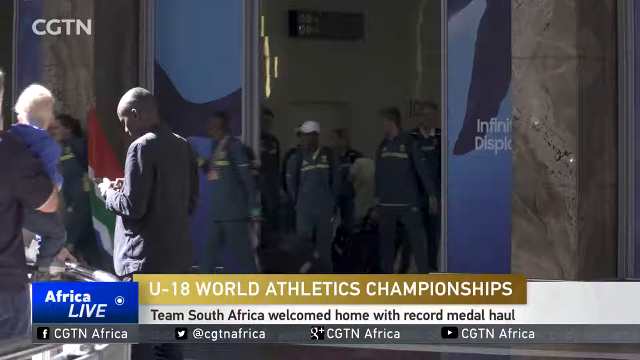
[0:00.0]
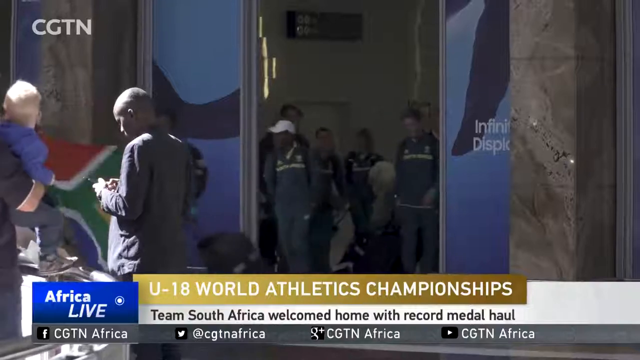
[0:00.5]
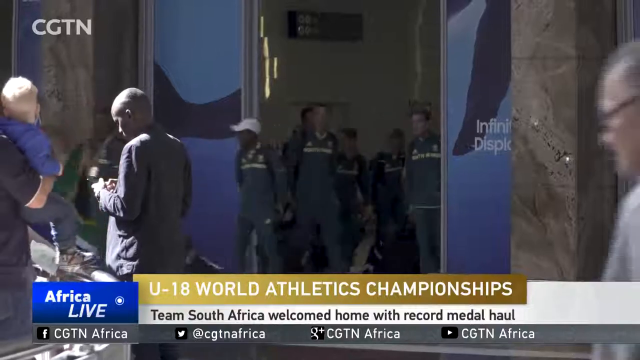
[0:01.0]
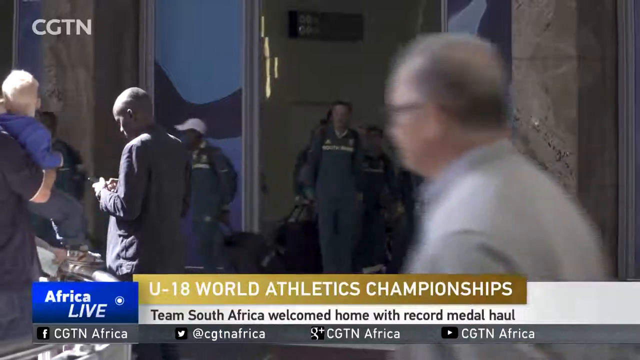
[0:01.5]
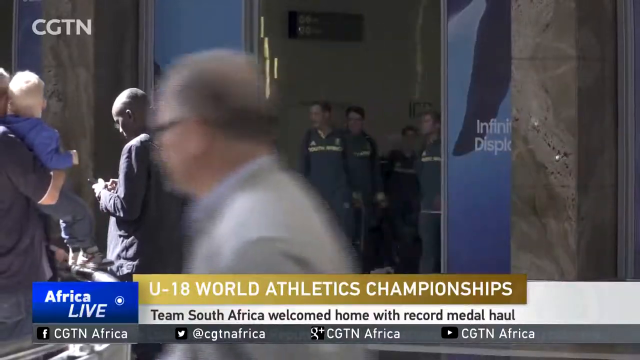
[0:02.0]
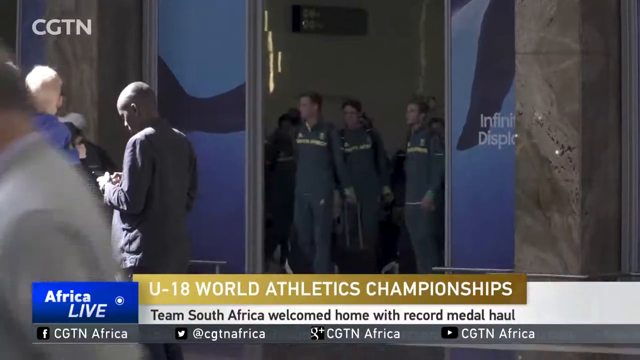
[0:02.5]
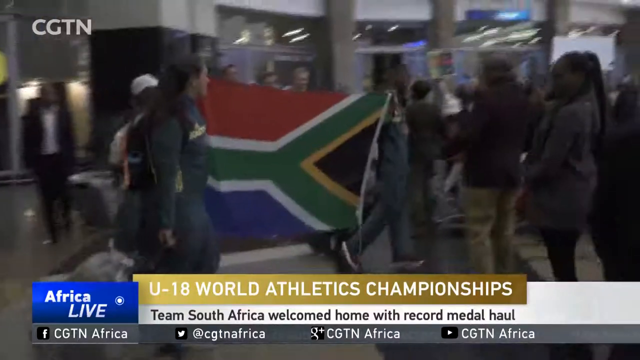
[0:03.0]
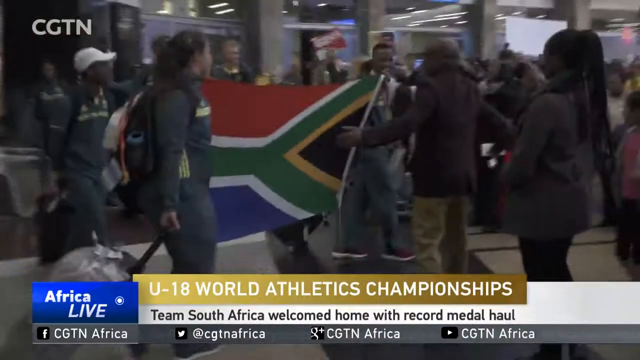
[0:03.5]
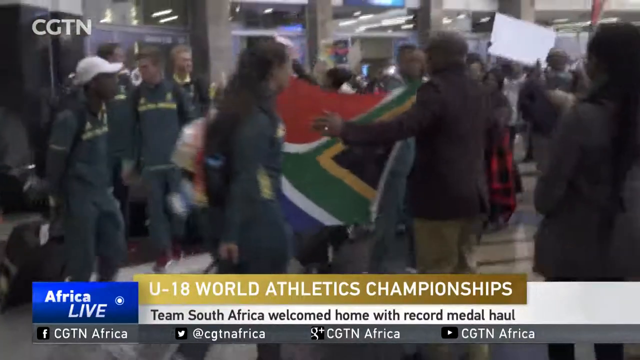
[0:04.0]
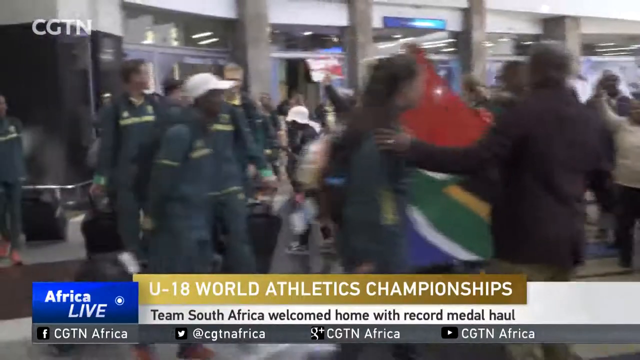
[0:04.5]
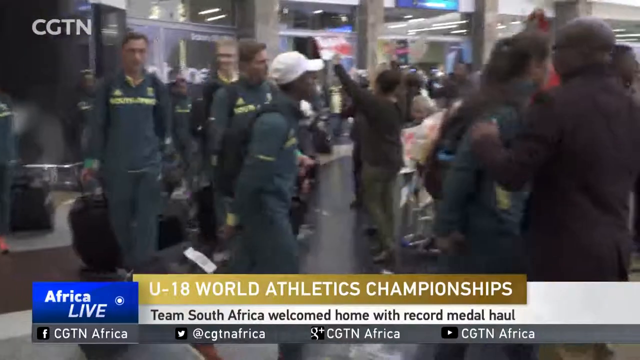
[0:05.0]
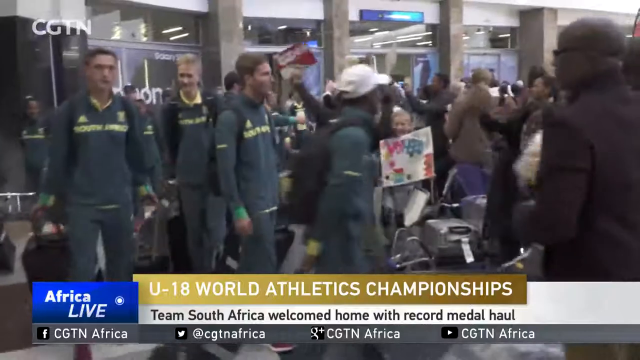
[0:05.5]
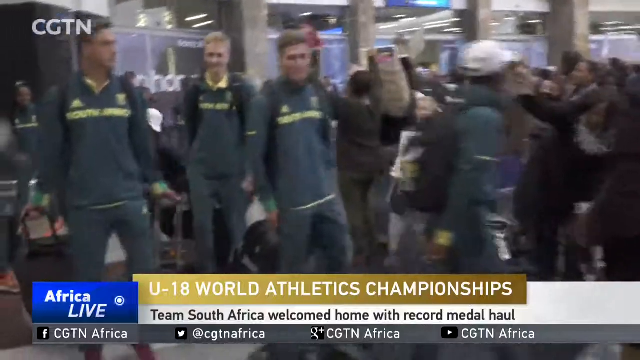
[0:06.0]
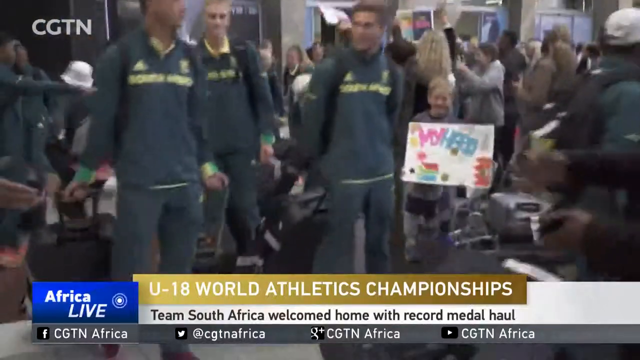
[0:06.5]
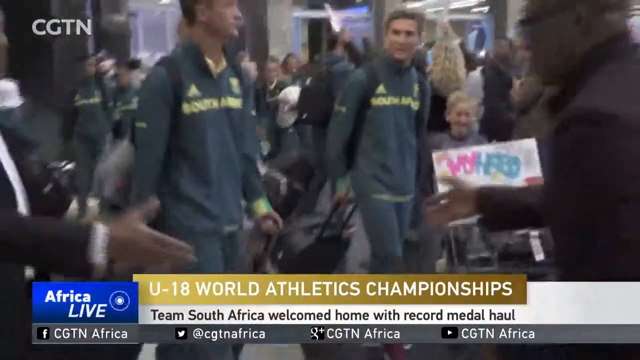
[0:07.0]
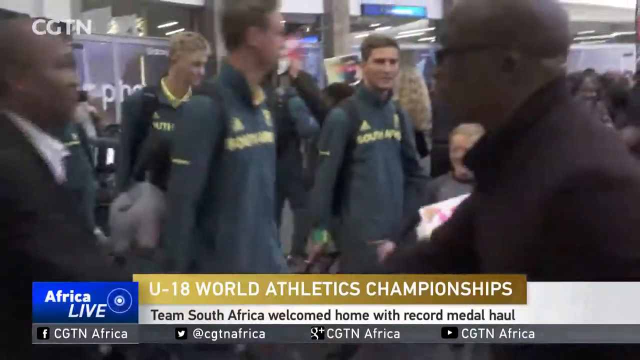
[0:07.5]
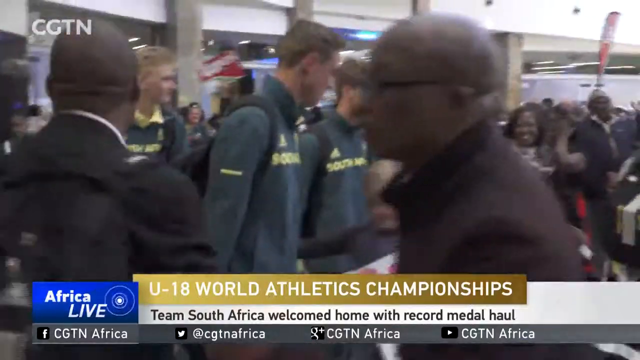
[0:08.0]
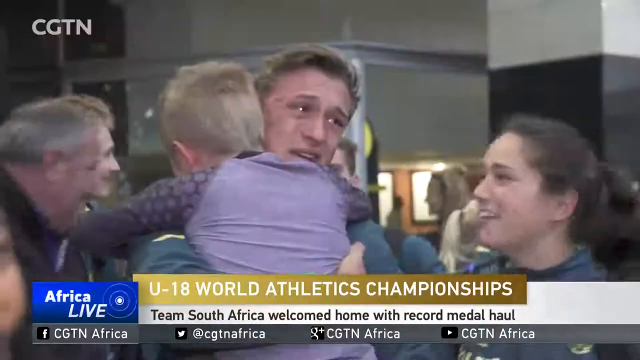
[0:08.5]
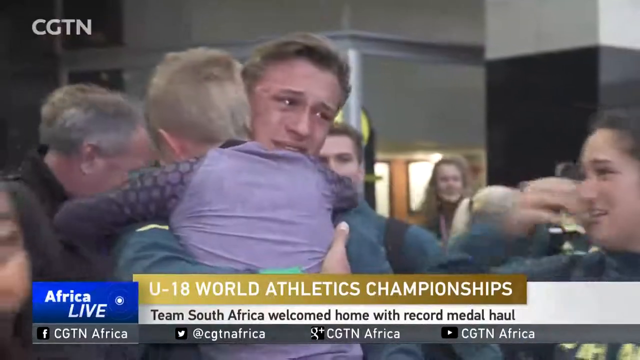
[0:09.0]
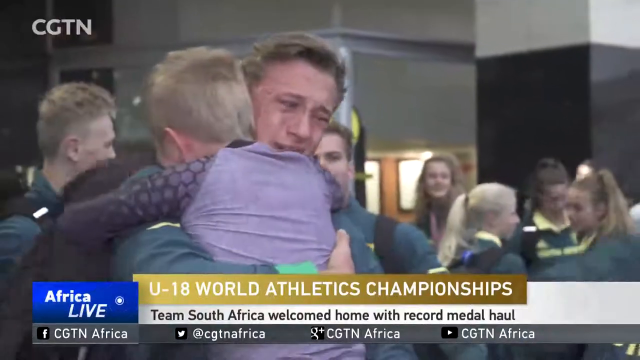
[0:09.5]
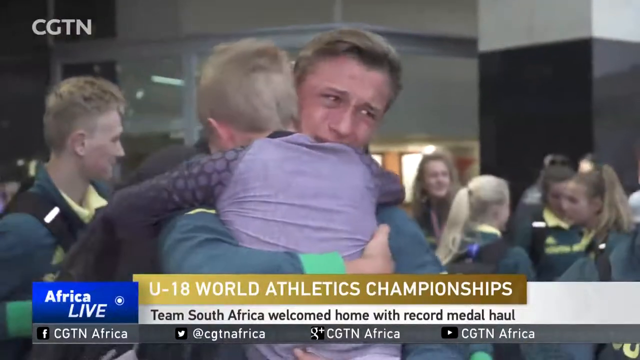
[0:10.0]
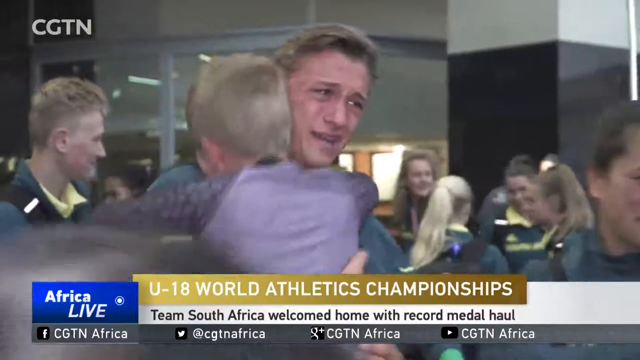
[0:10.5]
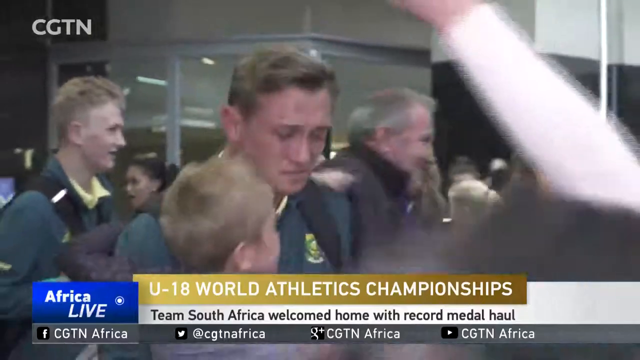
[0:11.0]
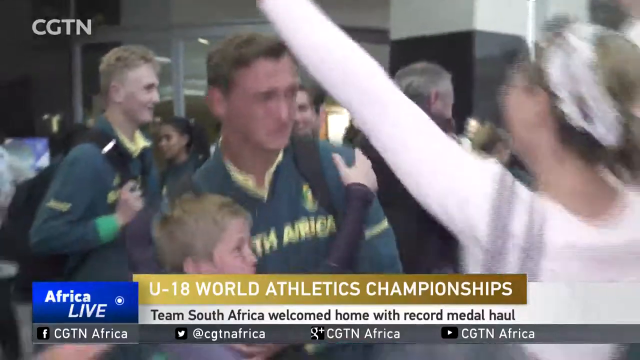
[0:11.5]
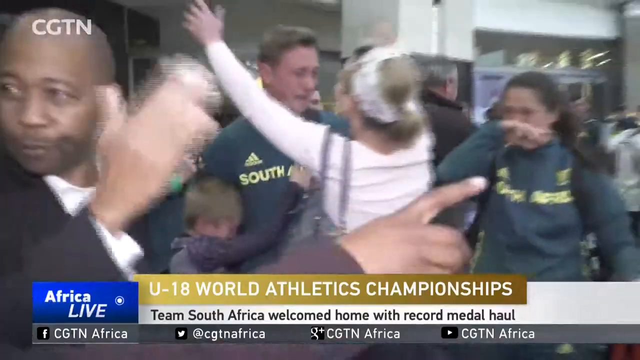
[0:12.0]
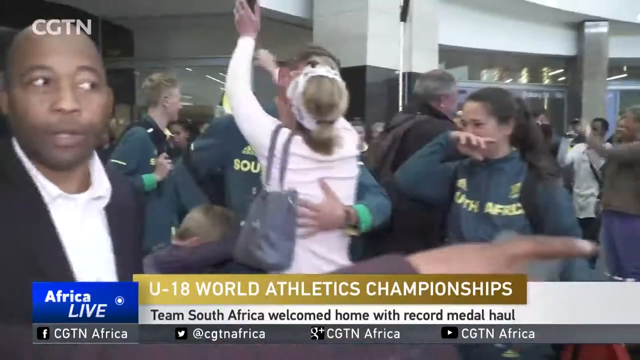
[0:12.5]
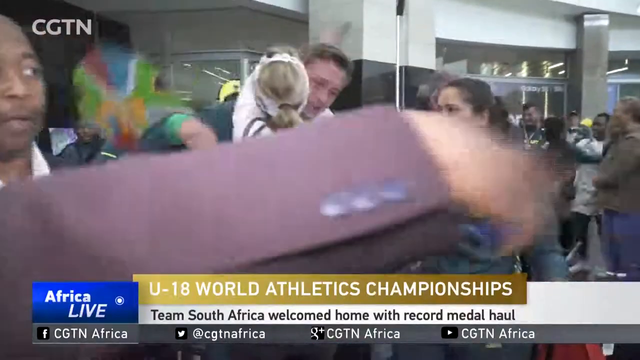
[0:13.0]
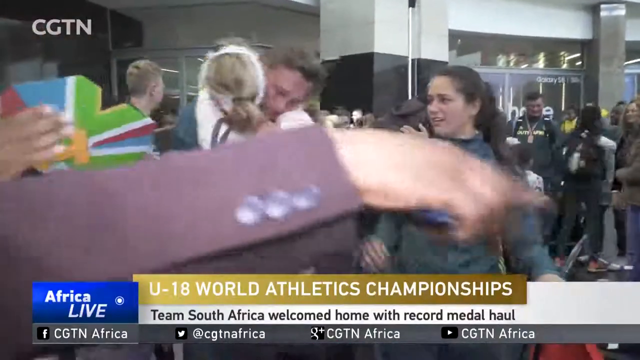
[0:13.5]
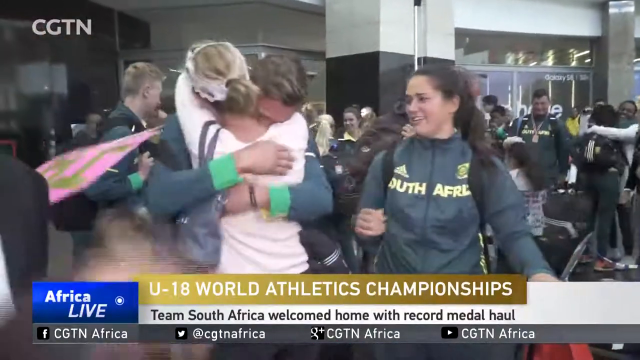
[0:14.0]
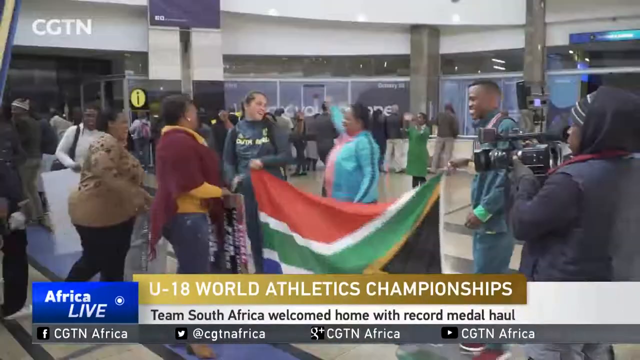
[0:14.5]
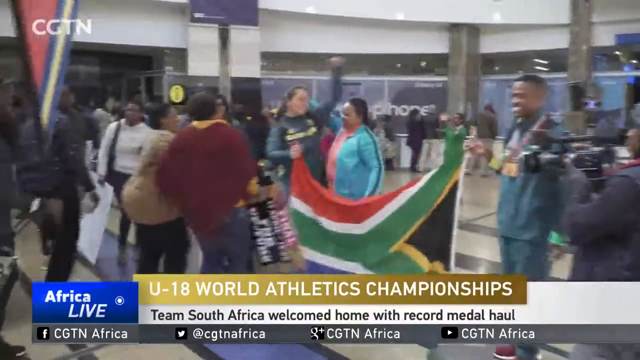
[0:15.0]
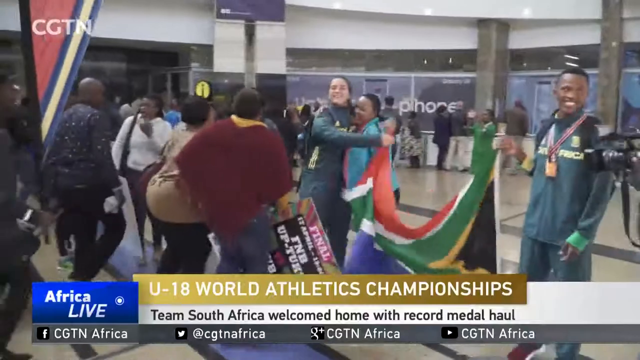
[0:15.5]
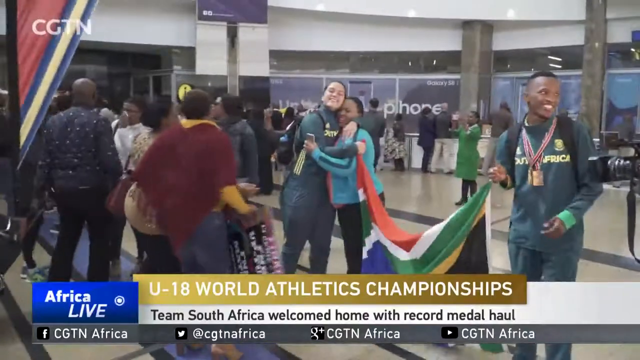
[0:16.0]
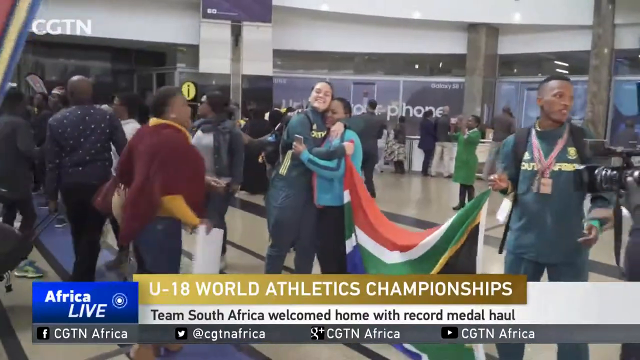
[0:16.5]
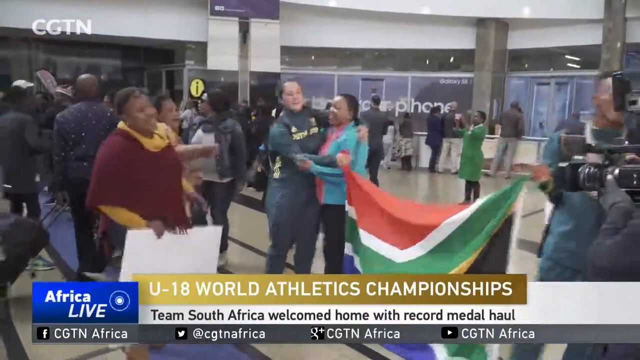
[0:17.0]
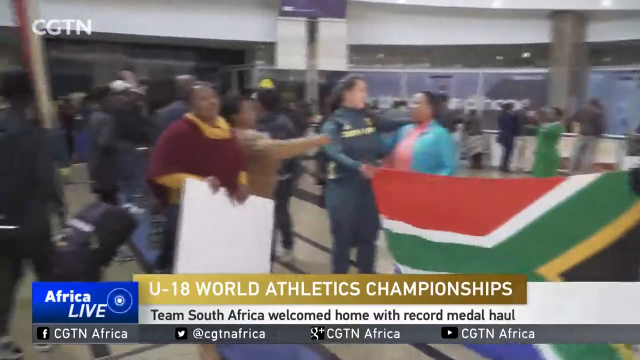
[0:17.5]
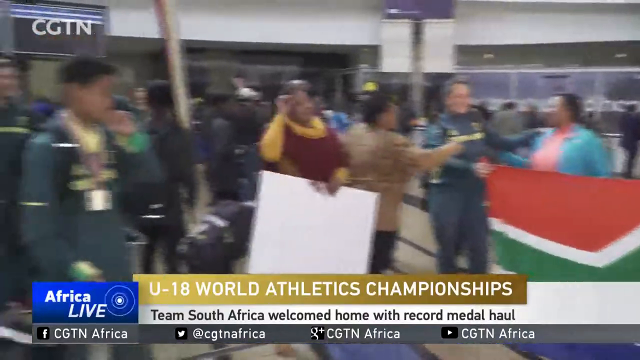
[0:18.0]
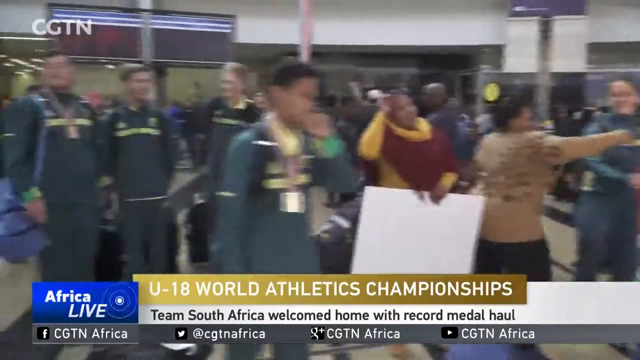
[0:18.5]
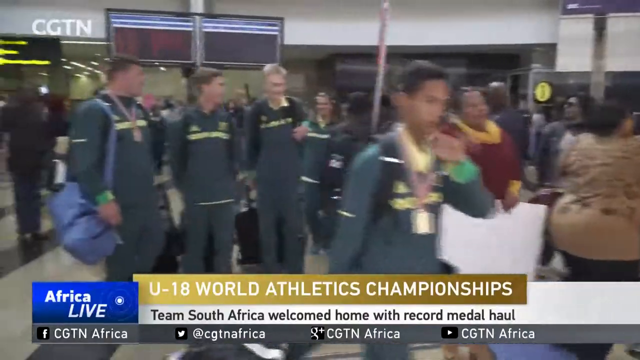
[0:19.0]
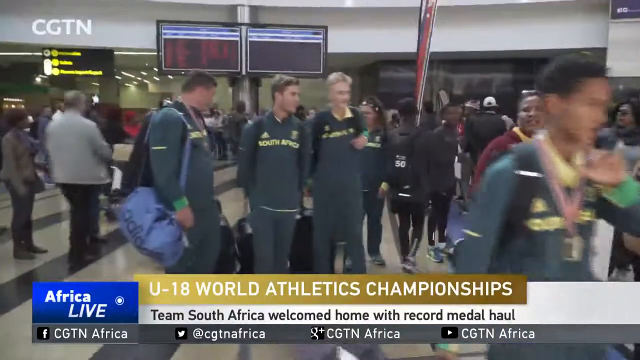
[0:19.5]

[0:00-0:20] An outdoor scene opens with a number of what look like athletes coming through a doorway, in what appears to be a news story. In the upper left corner are the white letters "CGTN." In the lower left corner, a small blue banner reads "Africa Live" in white text, and to the right of it, a gold and white banner at the bottom center says "U-18 World Athletics Championships" and "Team South Africa welcomed home with record medal haul." The athletes, who appear to be walking through an airport, all wear matching jackets and are greeted by their families. A close-up shows a young, blonde Caucasian male athlete with tears in his eyes as he grips a little boy, likely his son, perhaps four years old and blonde, whose arms are slung around his neck. A woman, perhaps the wife or mother, is crying and also getting hugged. Other family members wait with signs for the athletes to come off the plane and through the airport.